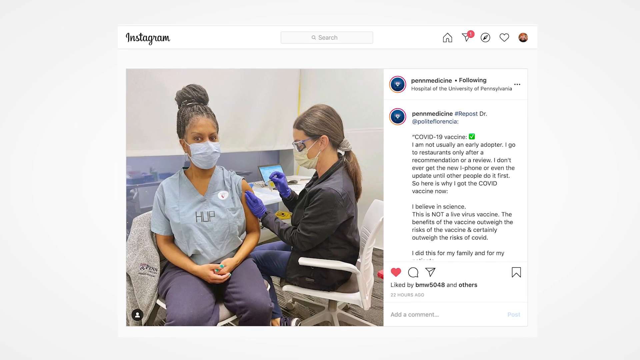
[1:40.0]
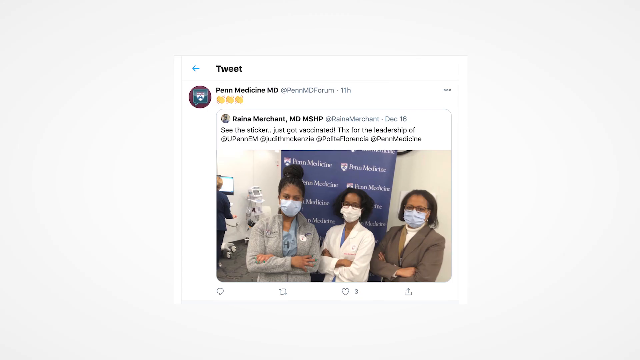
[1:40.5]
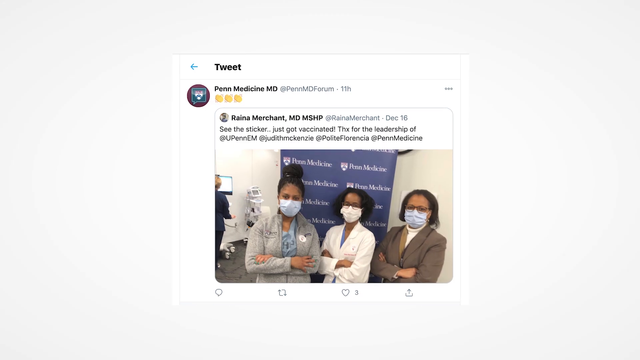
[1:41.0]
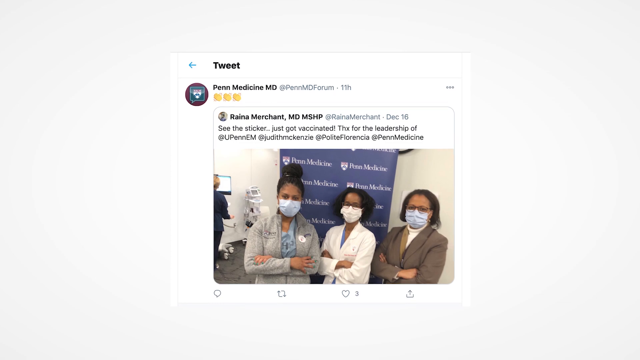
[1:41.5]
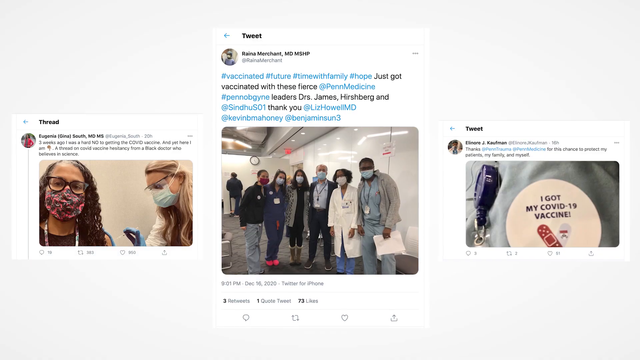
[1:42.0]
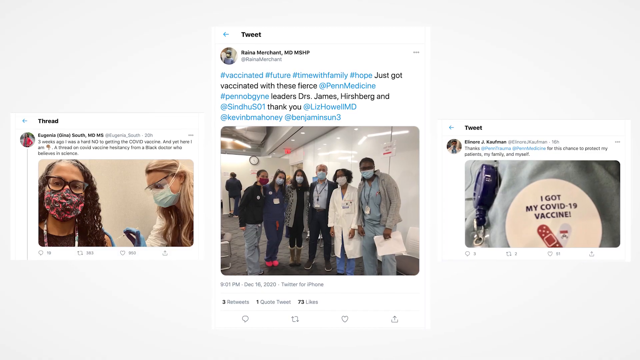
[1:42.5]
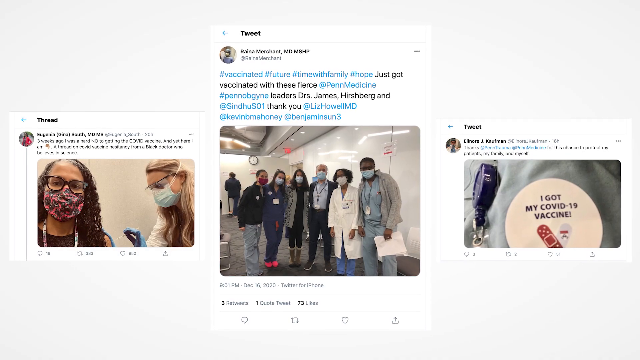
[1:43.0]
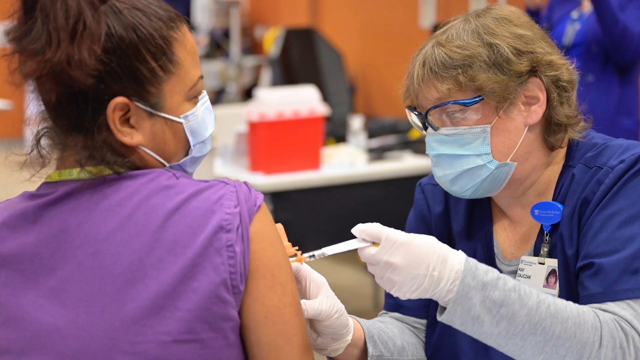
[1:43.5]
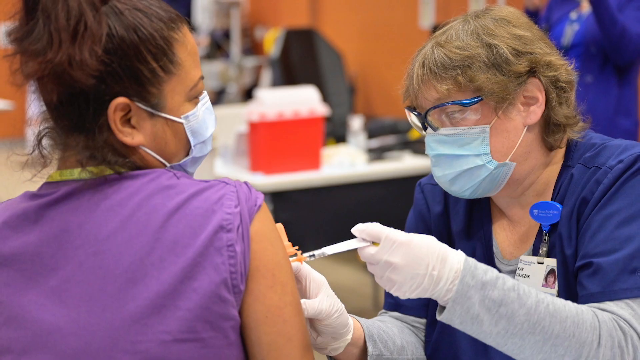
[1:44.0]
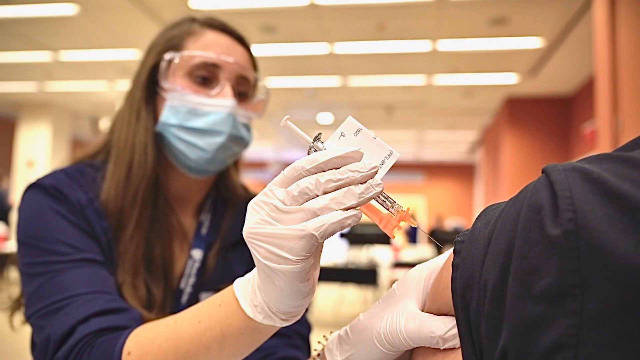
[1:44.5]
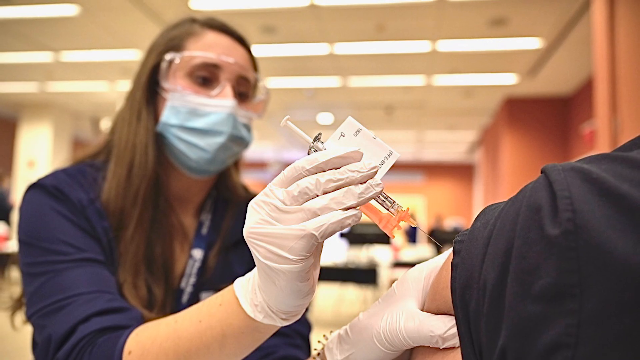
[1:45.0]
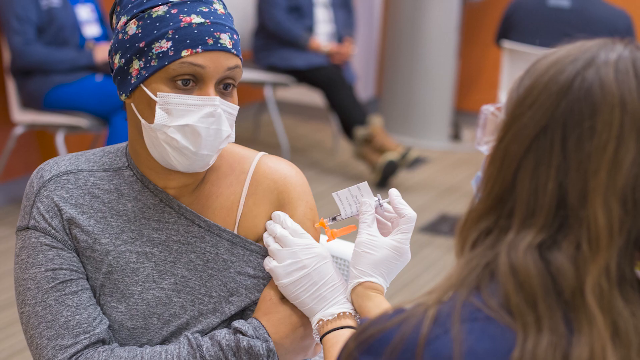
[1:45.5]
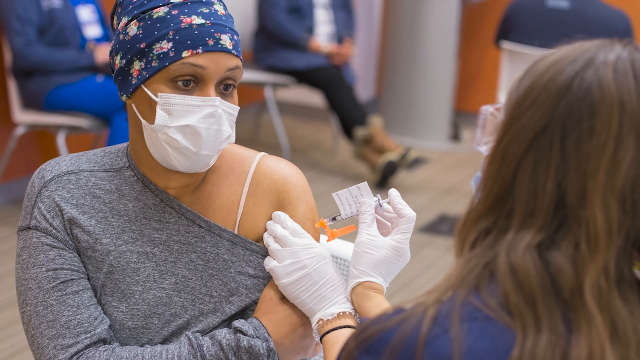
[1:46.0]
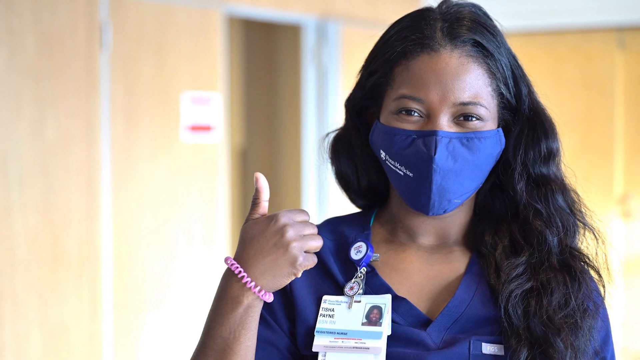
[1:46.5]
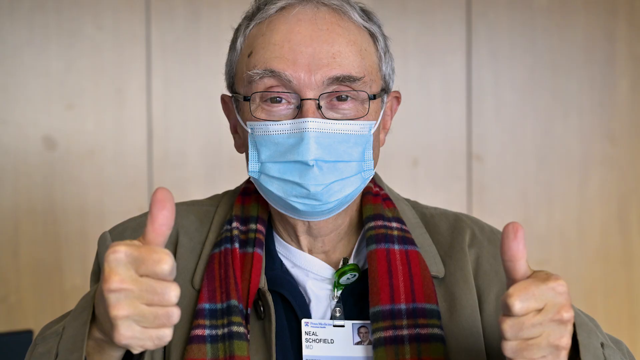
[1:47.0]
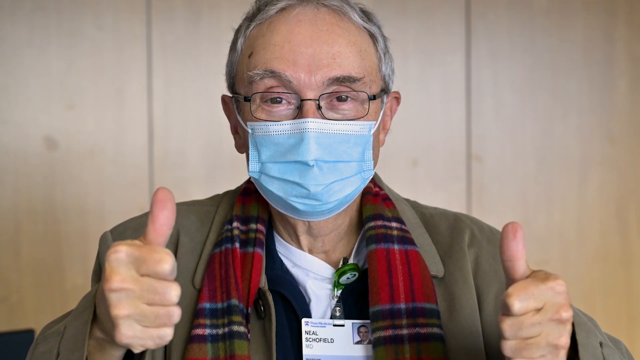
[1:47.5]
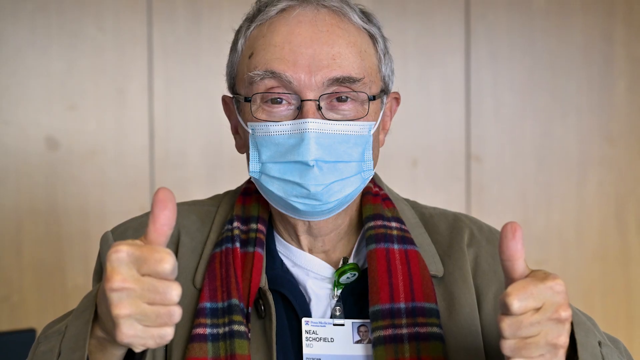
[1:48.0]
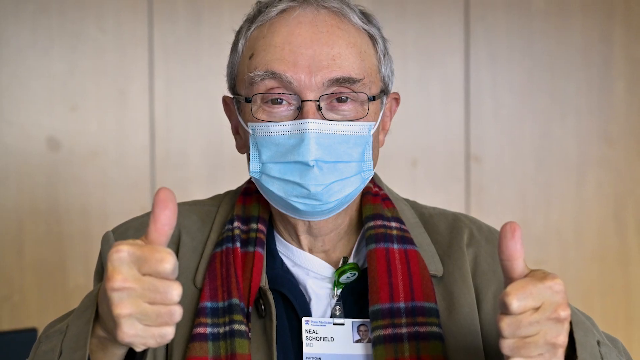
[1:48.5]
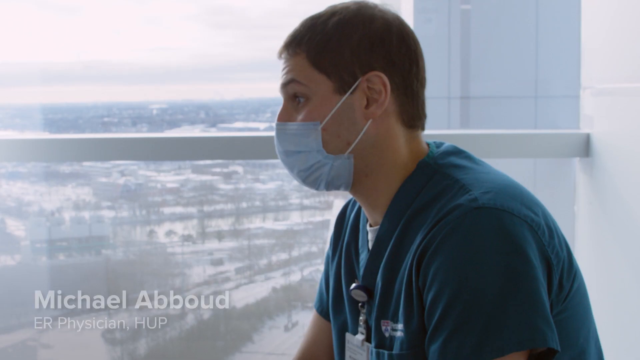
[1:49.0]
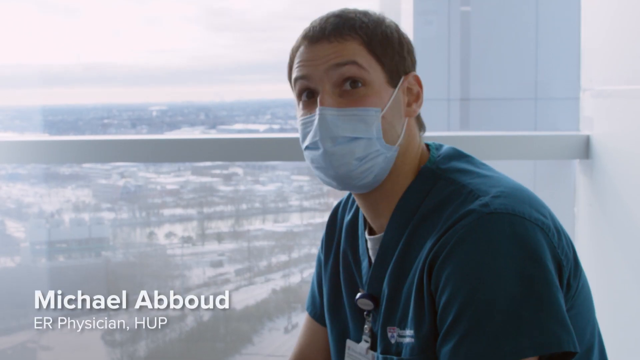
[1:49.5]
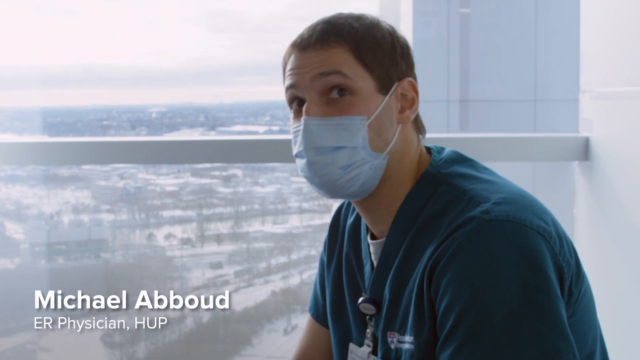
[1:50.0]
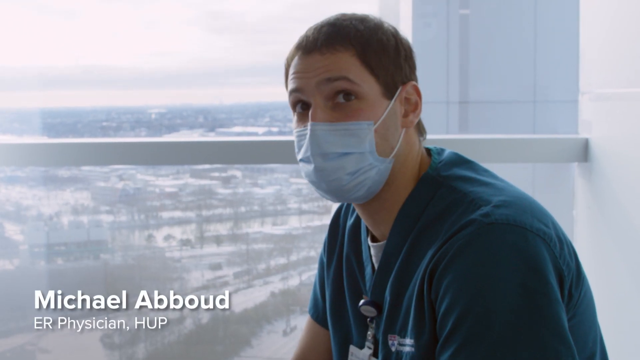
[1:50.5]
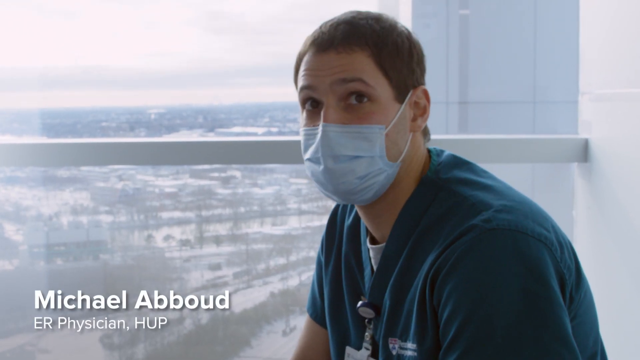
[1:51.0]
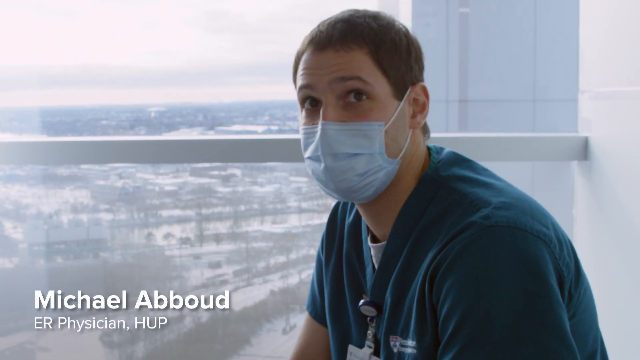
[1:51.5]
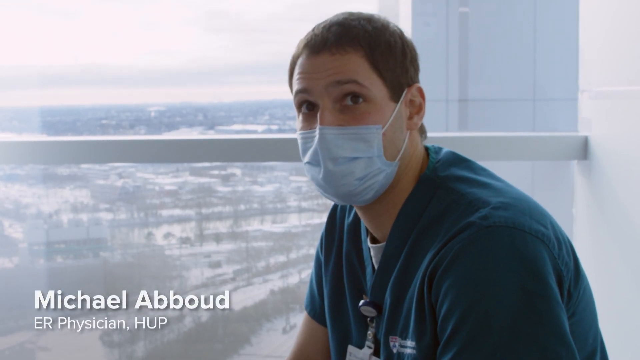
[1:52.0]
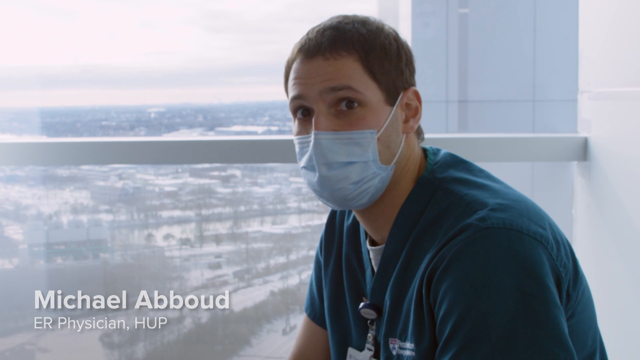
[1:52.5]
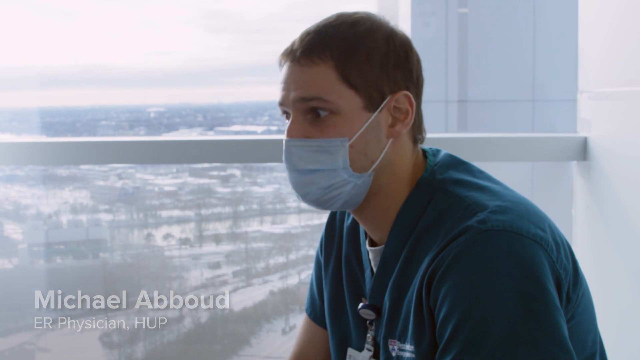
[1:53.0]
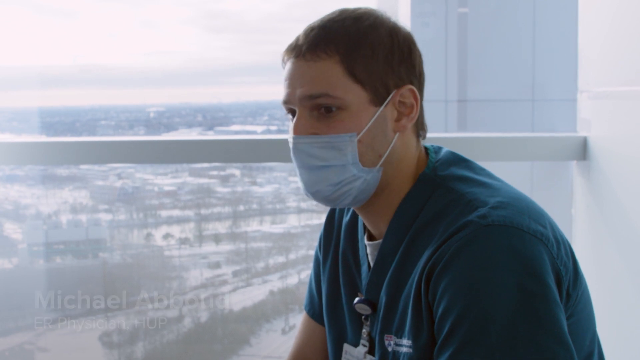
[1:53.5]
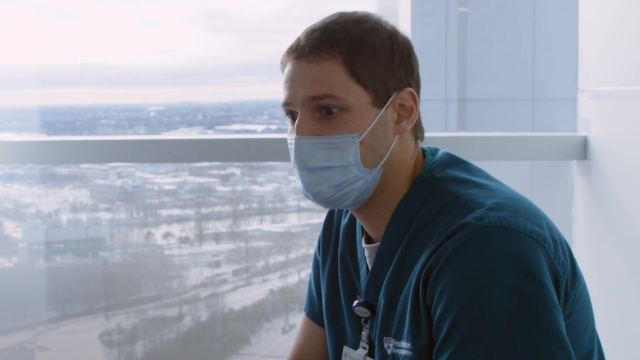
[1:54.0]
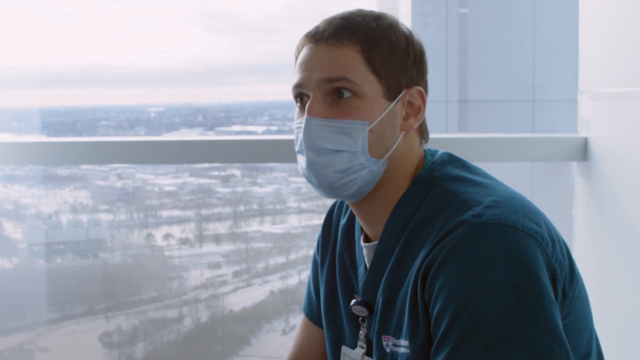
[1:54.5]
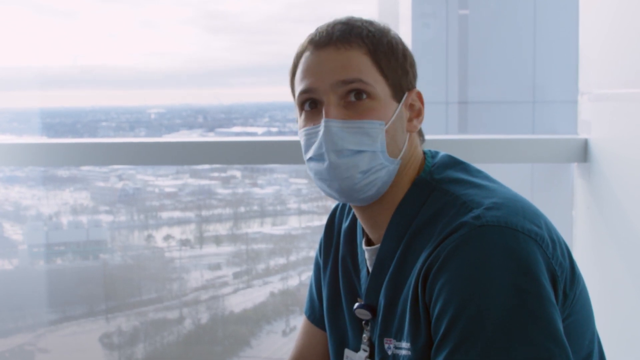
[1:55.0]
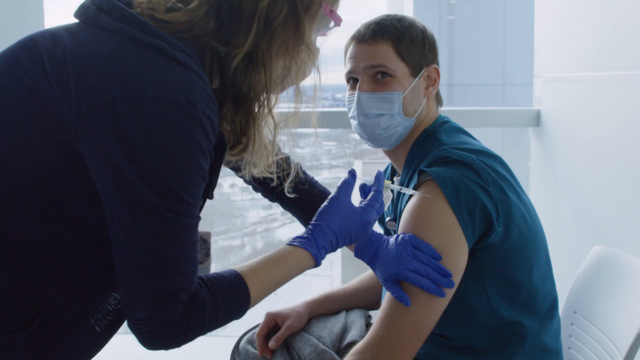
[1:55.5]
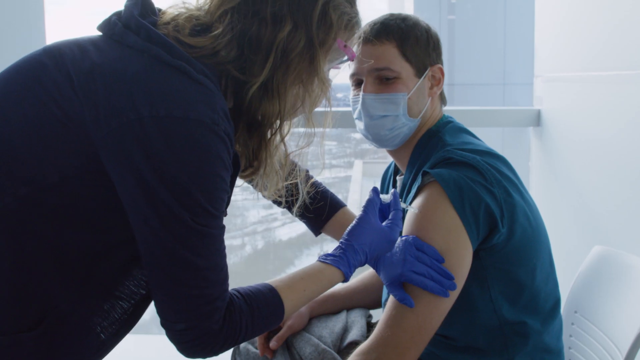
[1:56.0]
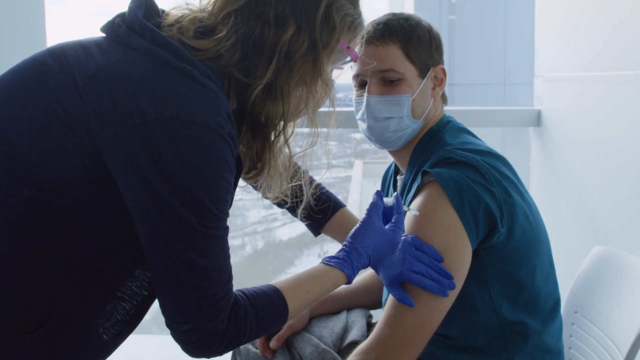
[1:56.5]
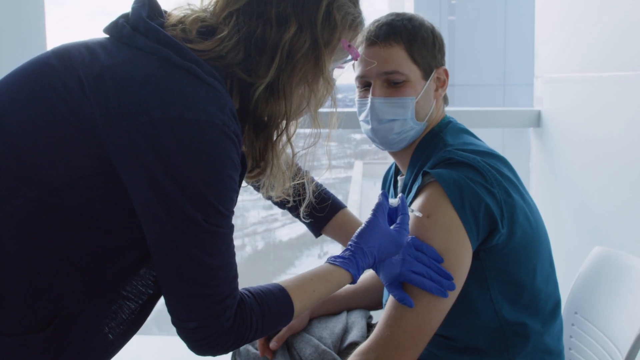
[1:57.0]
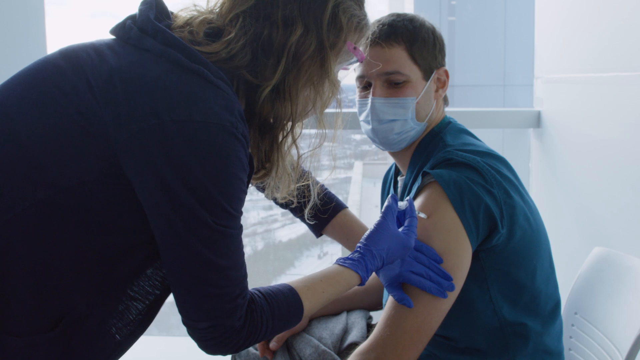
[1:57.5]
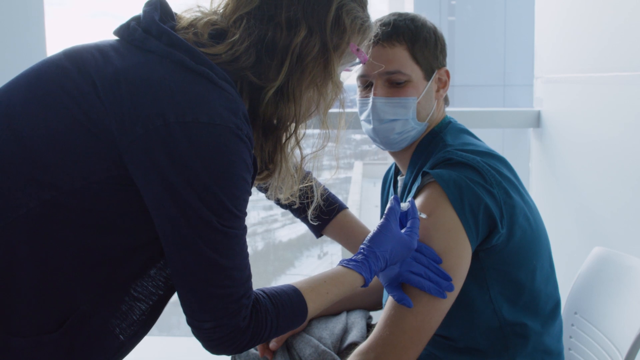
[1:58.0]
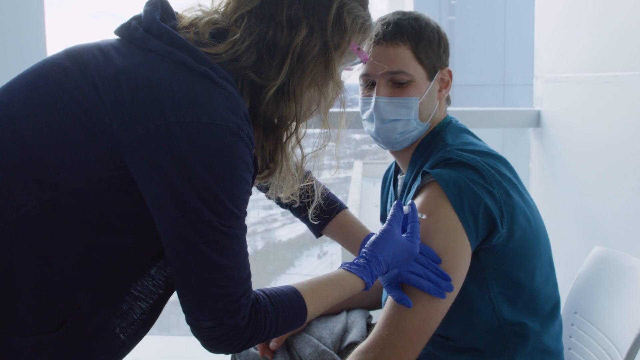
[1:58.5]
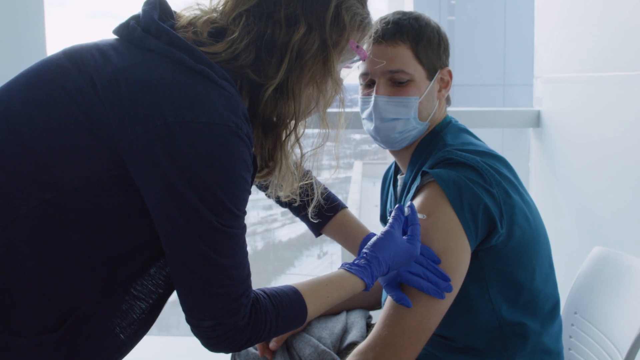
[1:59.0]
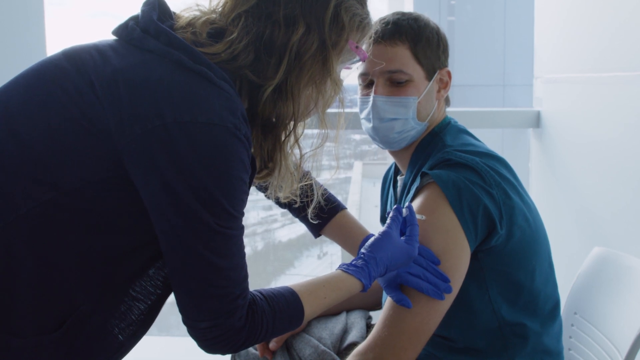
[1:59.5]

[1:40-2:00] A Facebook post appears, a still picture of a patient sitting in a seat receiving the vaccine from a doctor who is also sitting, so the two are level. The setting is medical, possibly an office or a lab. Another still image follows, a tweet from Rainer Merchant MD mentioning a sticker, having just got vaccinated, and thanks for the leadership of PenMed and the people working there. Several similar images of vaccinated people publicising it follow, then five or six quick shots of similar settings, each showing a doctor in a hospital room giving a patient the vaccine with a hypodermic. Michael Abood then appears, sitting by a window with a big, expansive view outside. The setting is presumably still the hospital, and he is quite high up, looking like perhaps 15 floors. He seems to be a doctor and has a stethoscope around his neck. He looks particularly worried, anxious and fearful, shaking his head with a lot of negative body language. A woman approaches to give him the vaccine. She pulls the skin of his left arm down with the four fingers of her hand so the skin tightens a little. With her right hand, thumb on the plunger and two fingers underneath, she smoothly administers the vaccine.